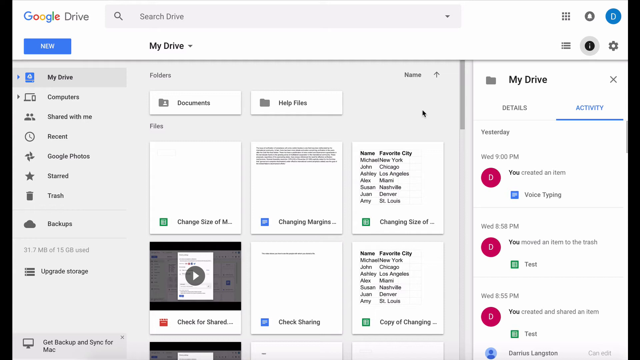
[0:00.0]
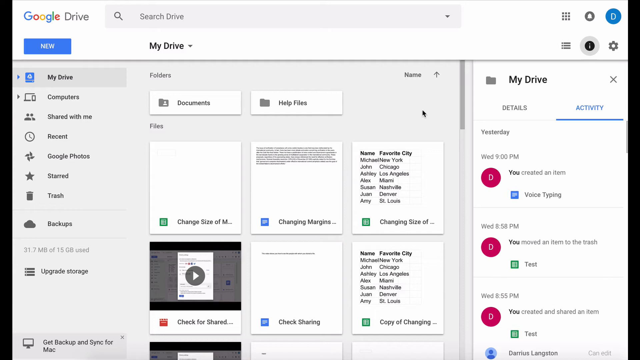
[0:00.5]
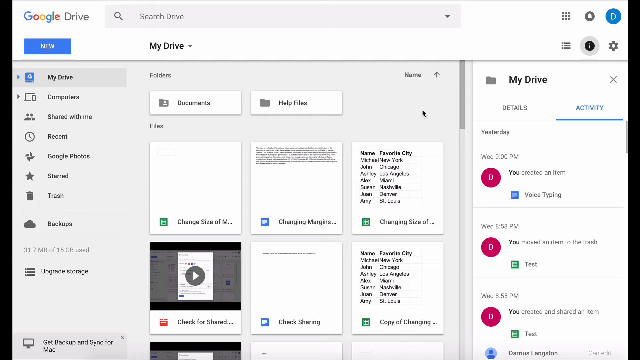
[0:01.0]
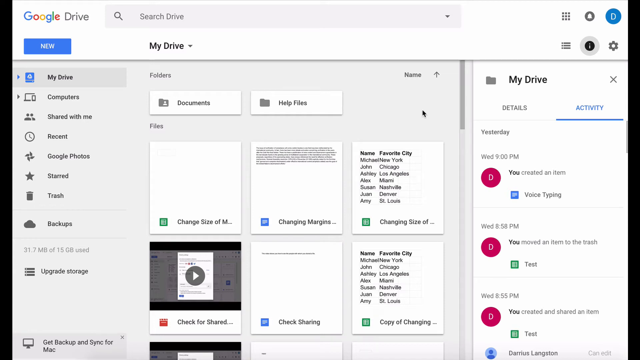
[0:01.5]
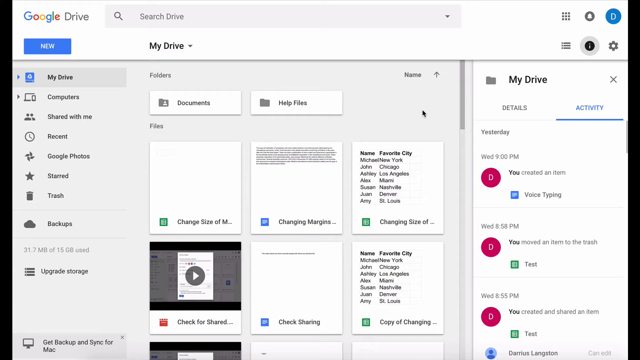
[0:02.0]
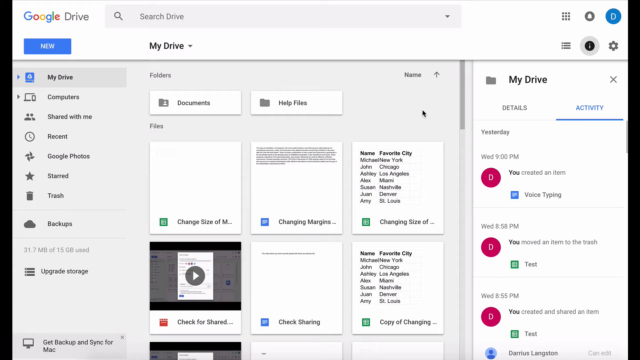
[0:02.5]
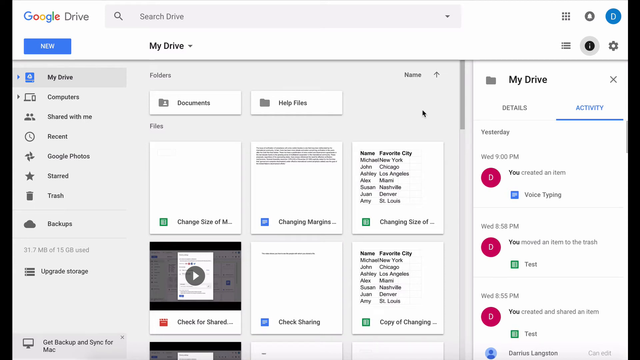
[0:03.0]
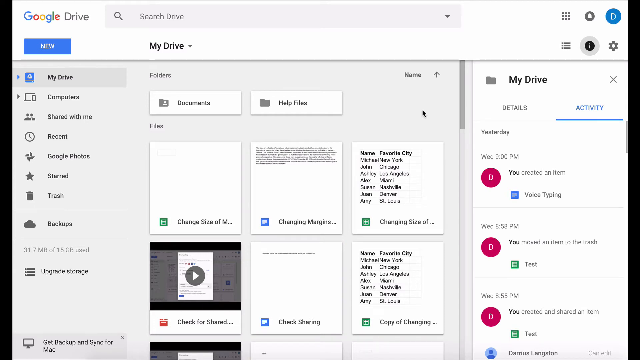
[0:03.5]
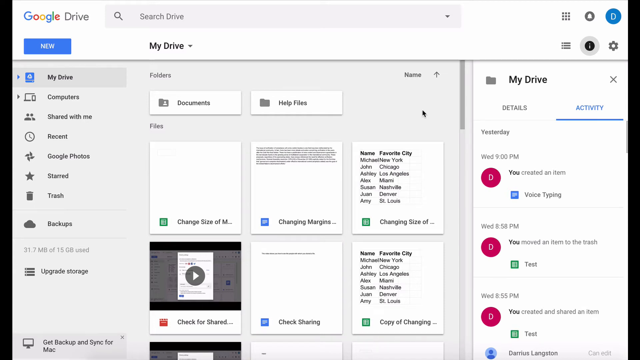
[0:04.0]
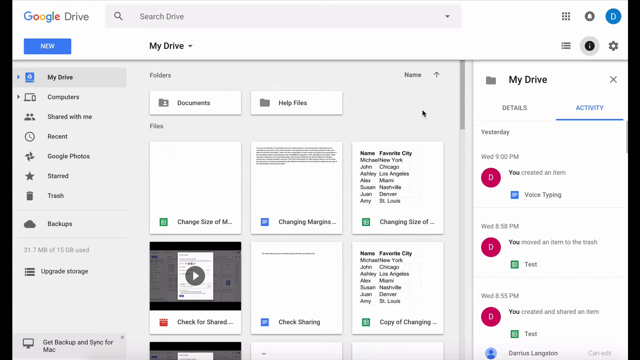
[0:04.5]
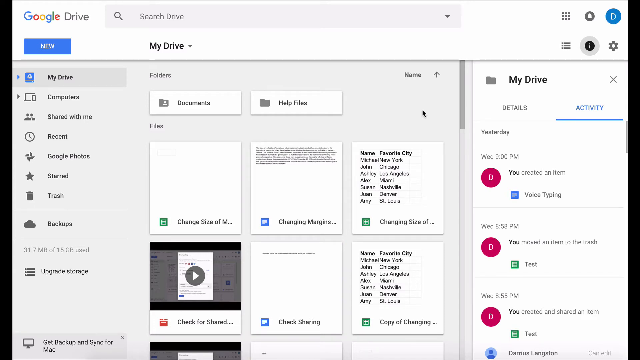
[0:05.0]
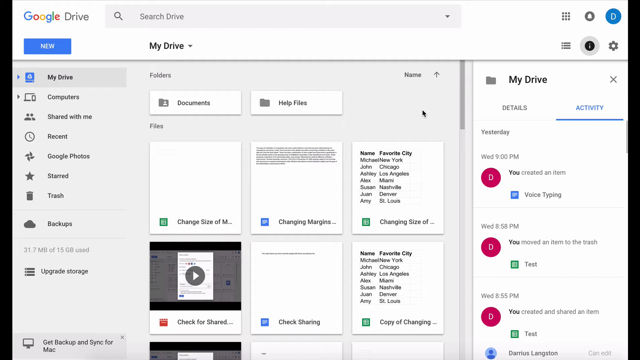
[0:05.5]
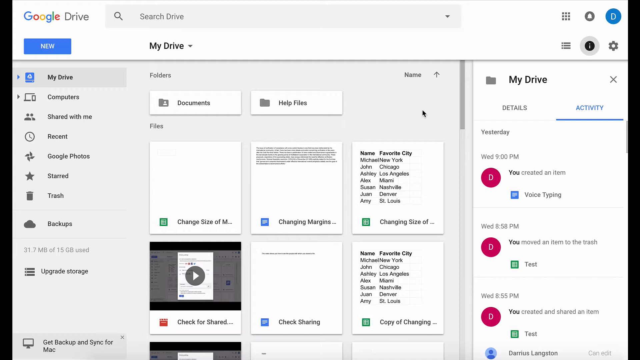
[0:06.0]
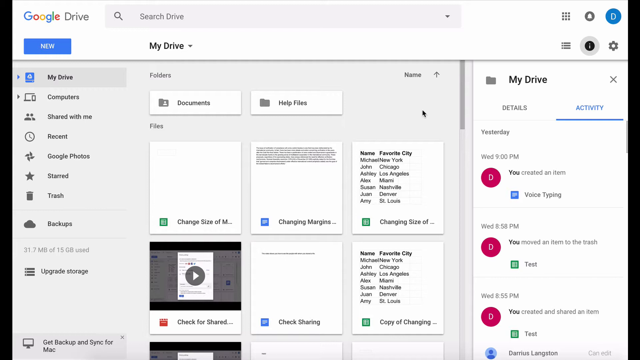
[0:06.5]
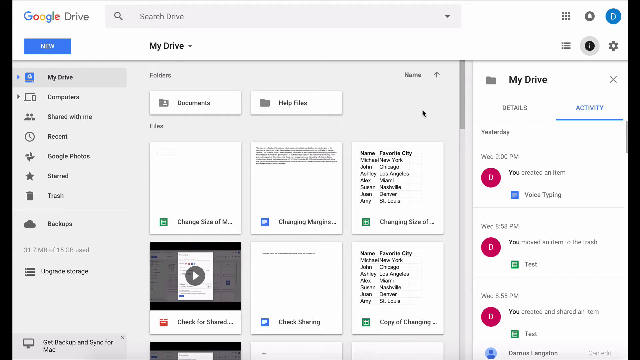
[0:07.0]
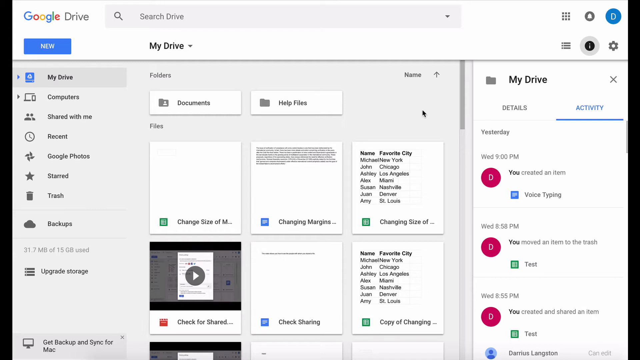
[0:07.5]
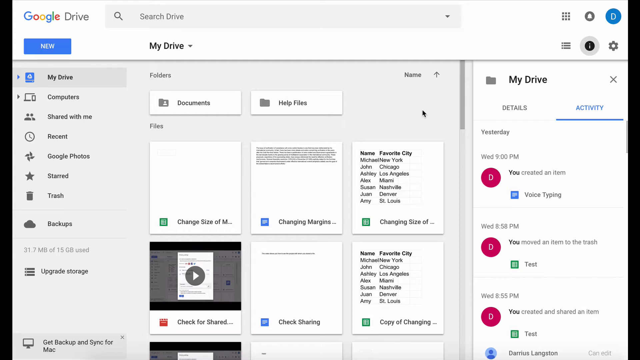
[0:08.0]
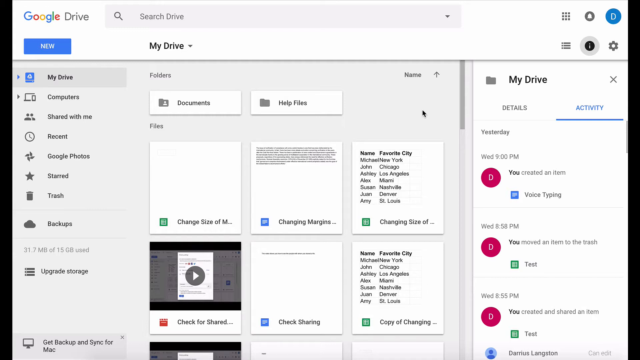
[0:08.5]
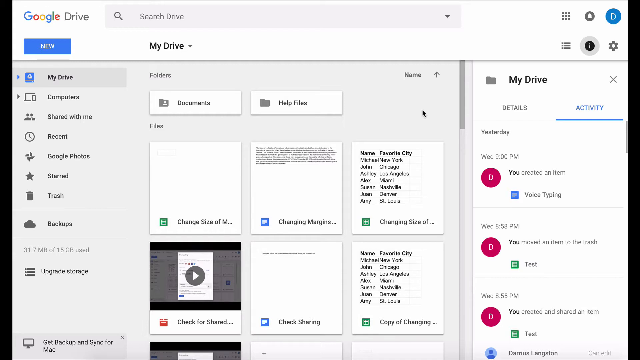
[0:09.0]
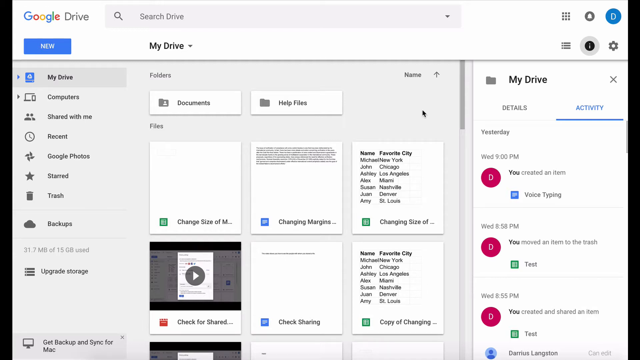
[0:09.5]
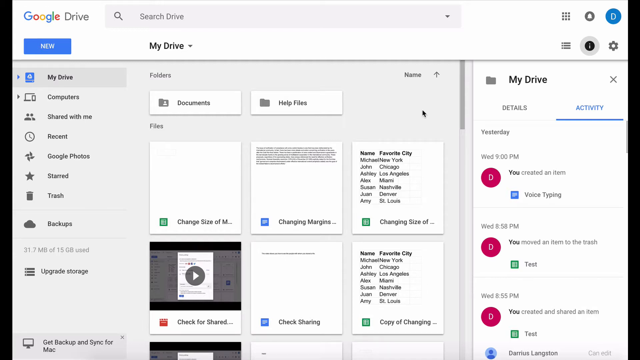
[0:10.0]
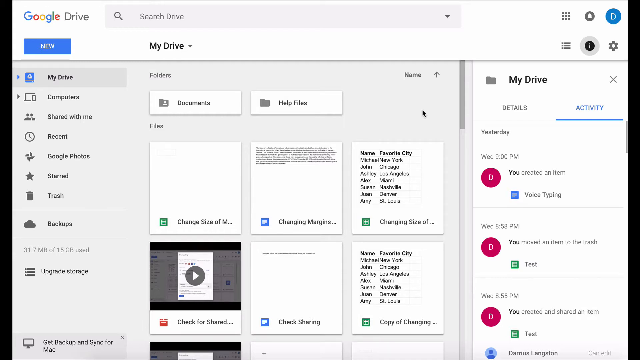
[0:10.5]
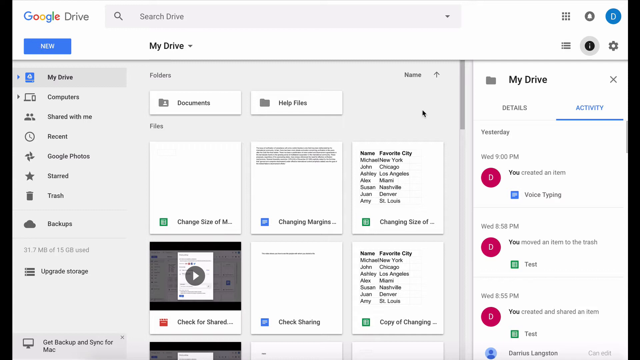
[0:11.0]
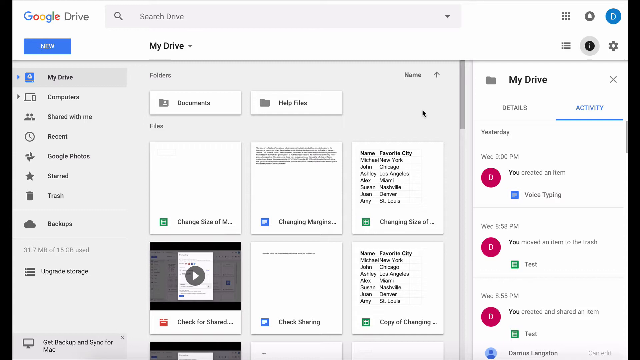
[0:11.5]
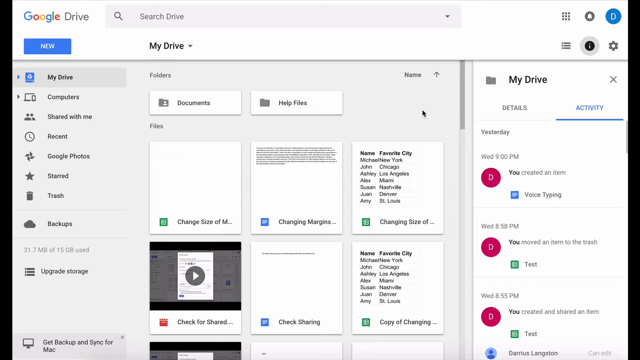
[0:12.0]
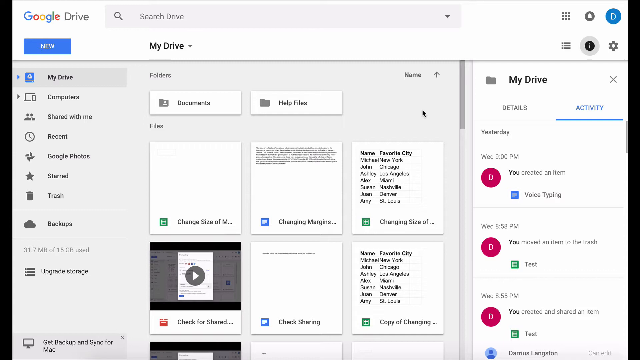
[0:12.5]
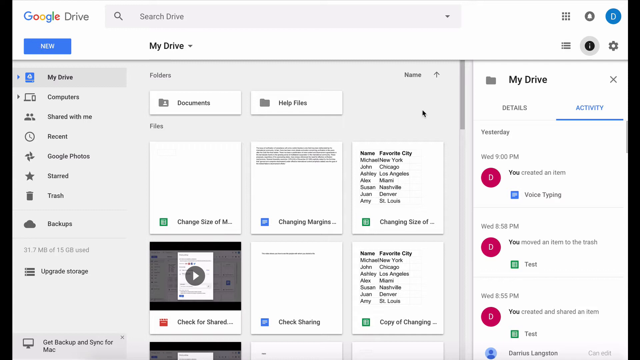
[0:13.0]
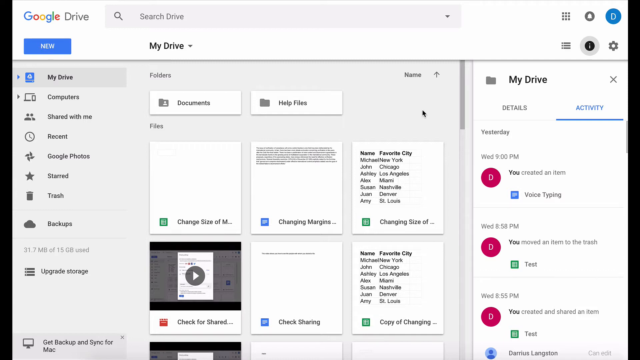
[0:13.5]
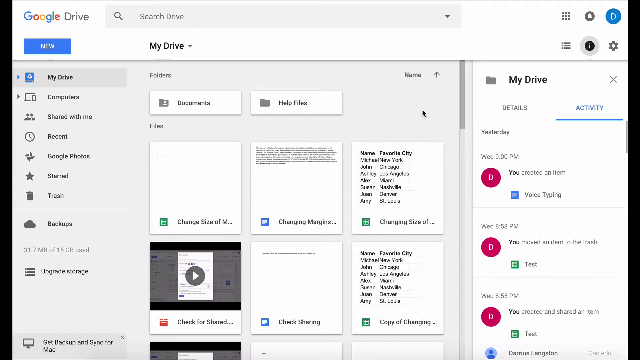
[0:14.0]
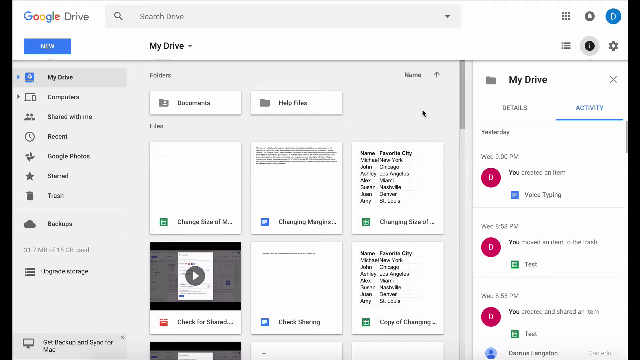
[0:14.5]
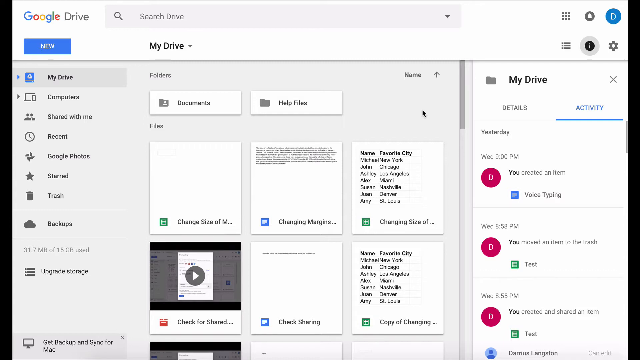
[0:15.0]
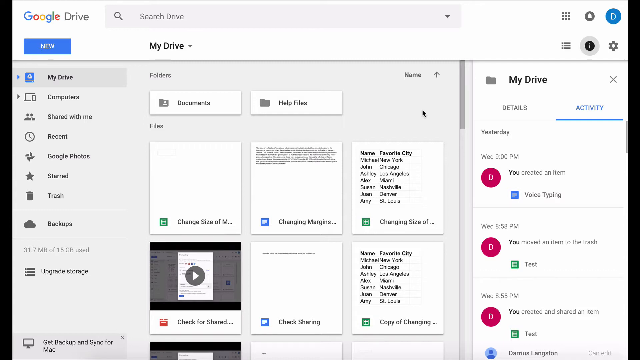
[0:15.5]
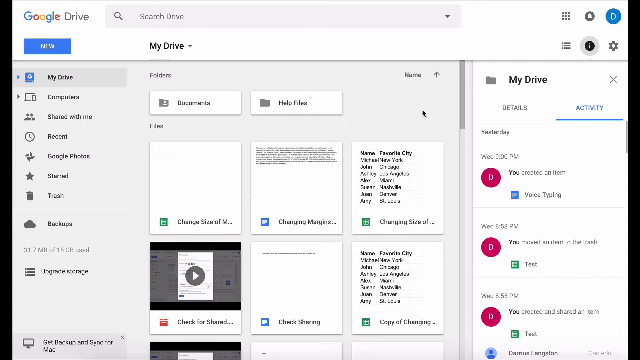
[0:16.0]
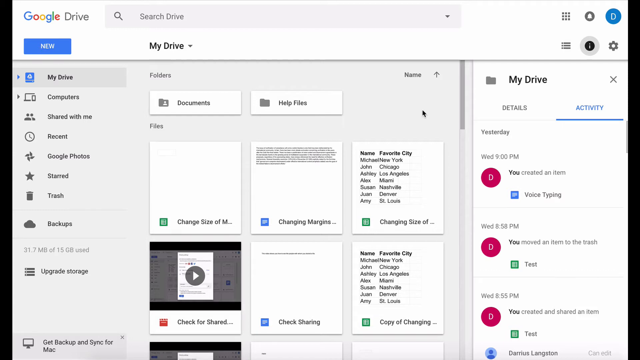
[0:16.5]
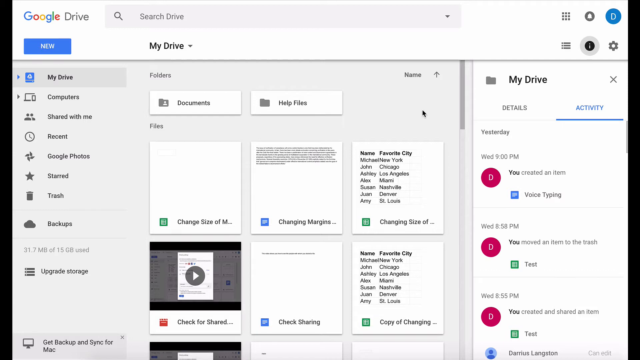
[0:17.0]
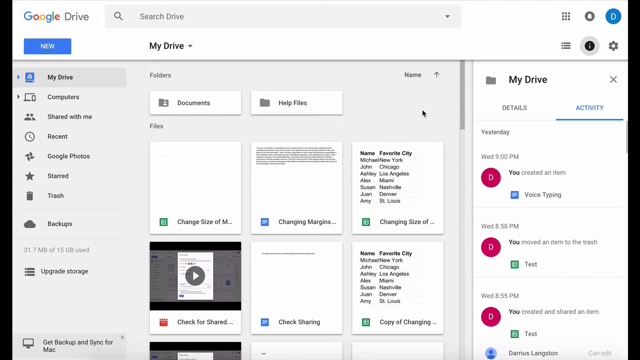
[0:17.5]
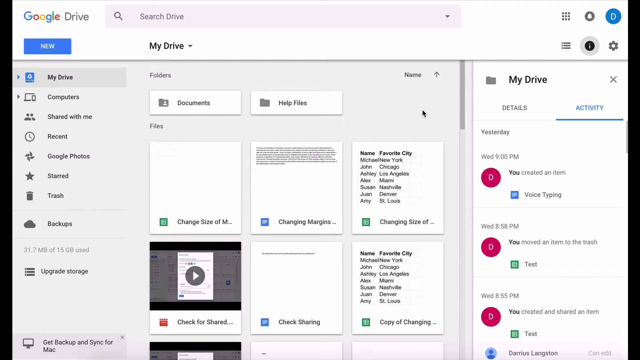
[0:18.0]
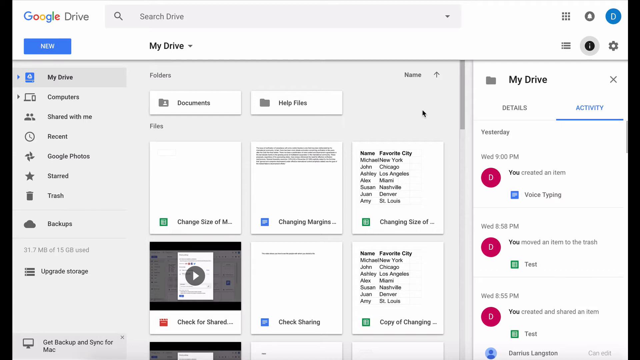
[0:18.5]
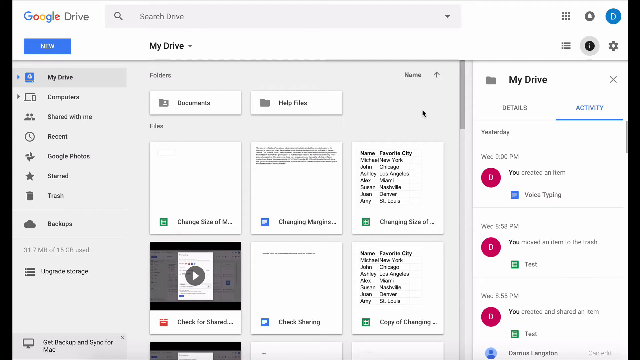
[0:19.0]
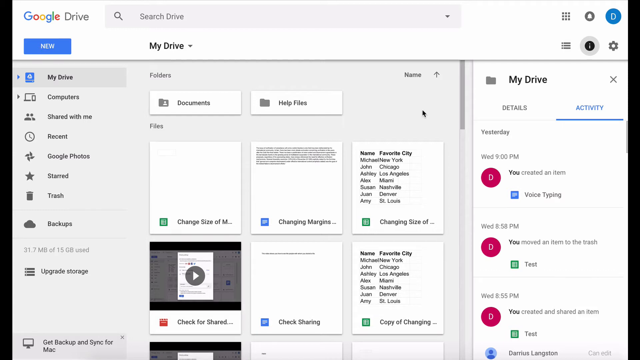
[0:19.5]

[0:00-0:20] The screen appears to show Google Drive on a computer. Along the left are "My Drive", "Computer", "Shared with me", "Recent", "Google Photos", what seems to be "Starred", "Trash", "Backups" and "Upgrade storage". To the right of that are items labeled "Documents", "Help files" and "Changed margins", plus another about changing size. At the very right of the screen is "My Drive", "Details", "Activity", with the entries "Yesterday", "Wednesday at 9pm, you created an item", "Voice typing", "Wednesday at 8.58pm, you moved an item to the trash" and, below that, "Test". In the middle to the right is a list of names and favorite cities: Michael, New York; John, Chicago; Ashley, Los Angeles; and, apparently, Alex, Miami; Susan, Nashville; Juan, Denver; and Amy, St. Louis.